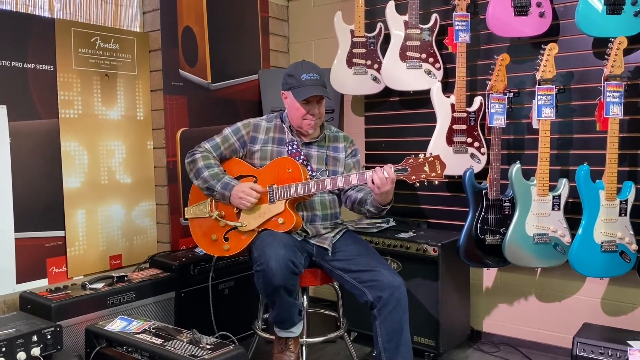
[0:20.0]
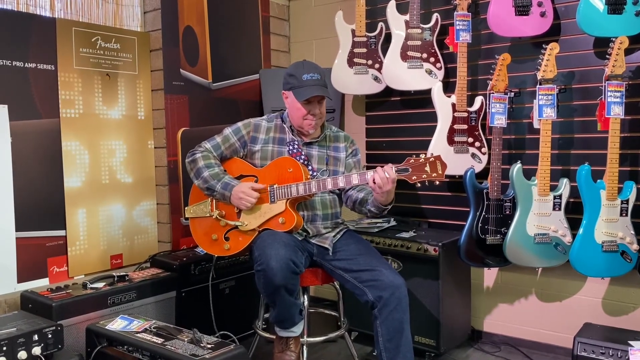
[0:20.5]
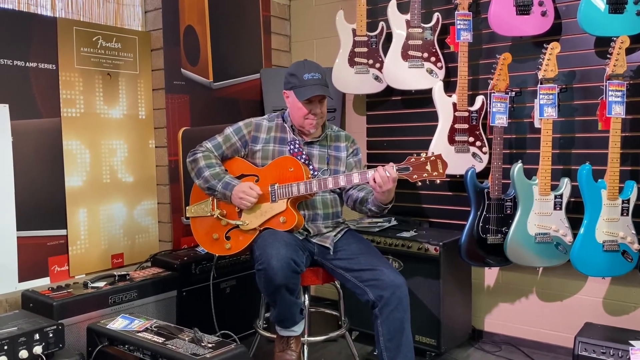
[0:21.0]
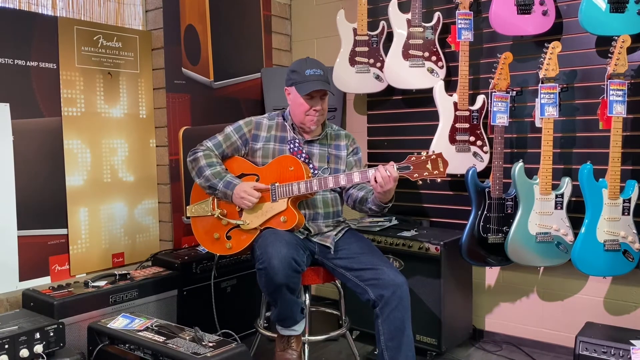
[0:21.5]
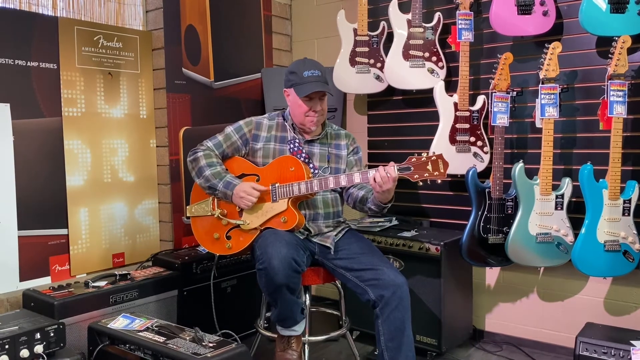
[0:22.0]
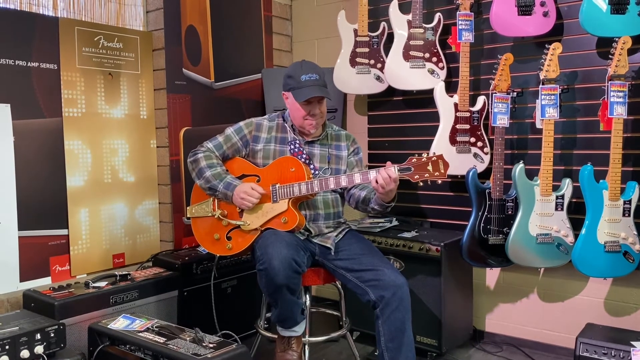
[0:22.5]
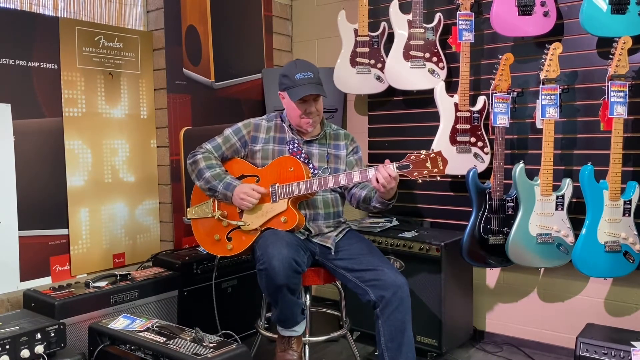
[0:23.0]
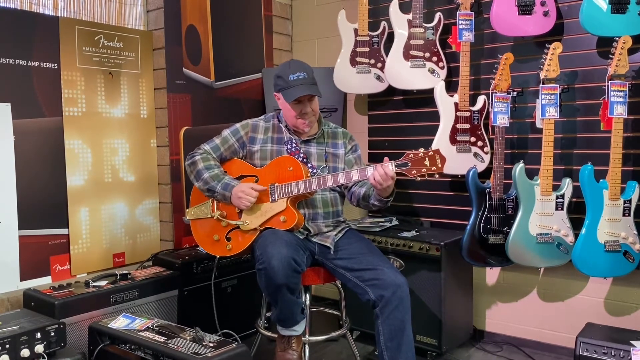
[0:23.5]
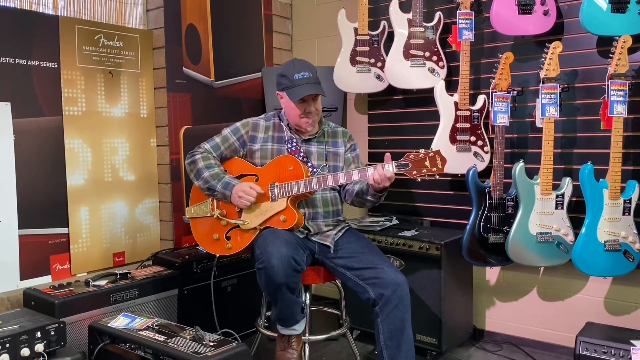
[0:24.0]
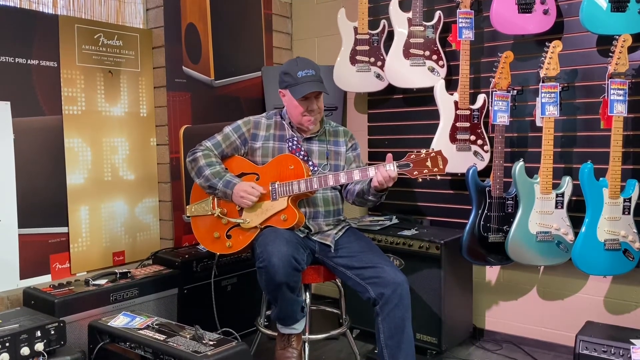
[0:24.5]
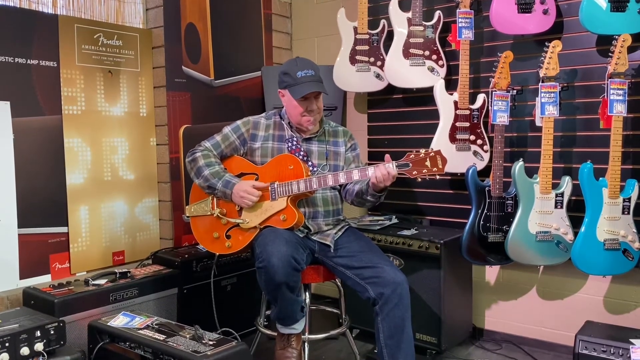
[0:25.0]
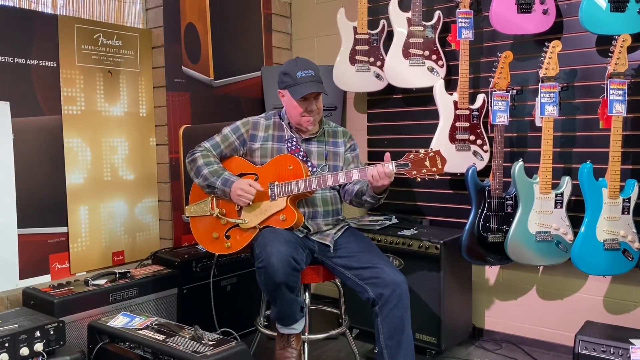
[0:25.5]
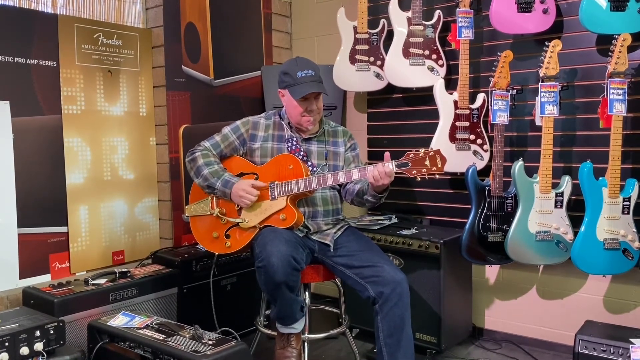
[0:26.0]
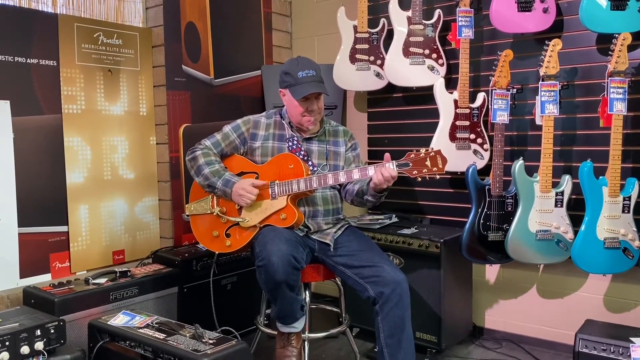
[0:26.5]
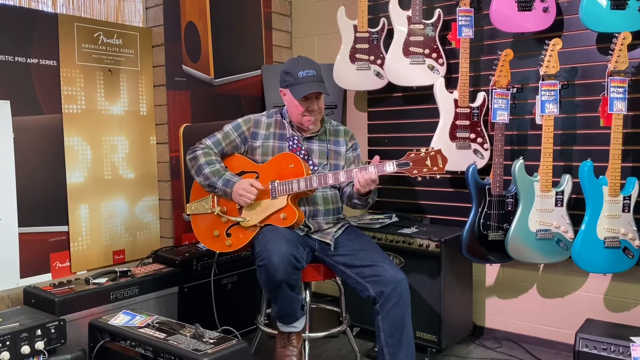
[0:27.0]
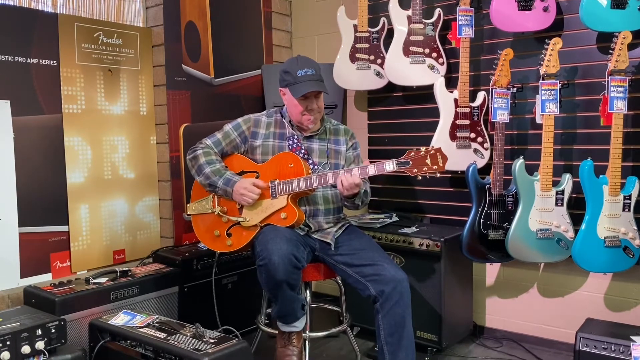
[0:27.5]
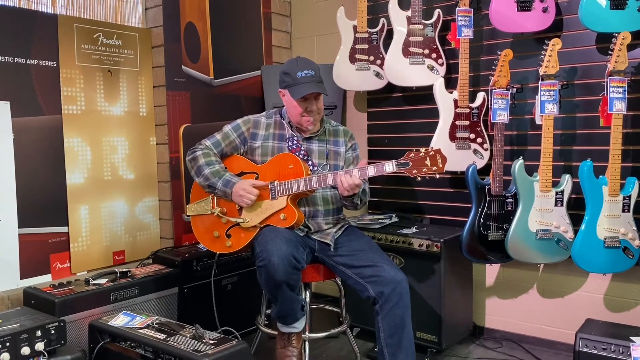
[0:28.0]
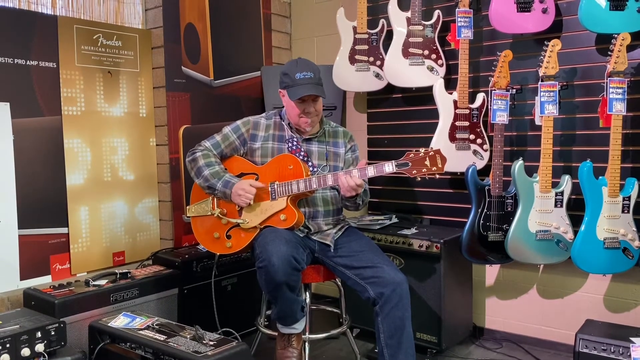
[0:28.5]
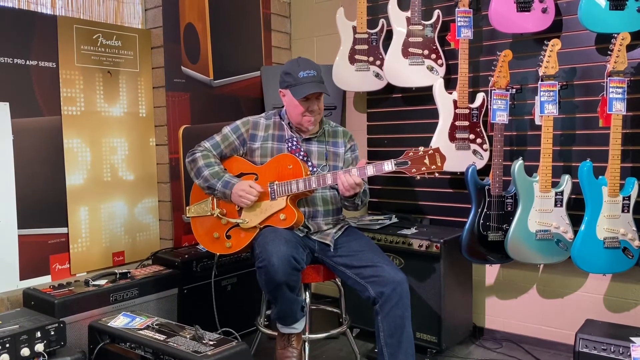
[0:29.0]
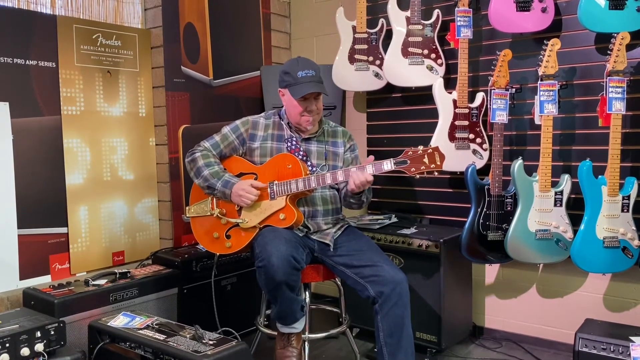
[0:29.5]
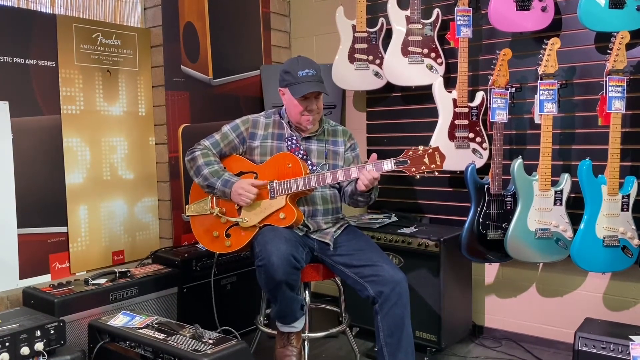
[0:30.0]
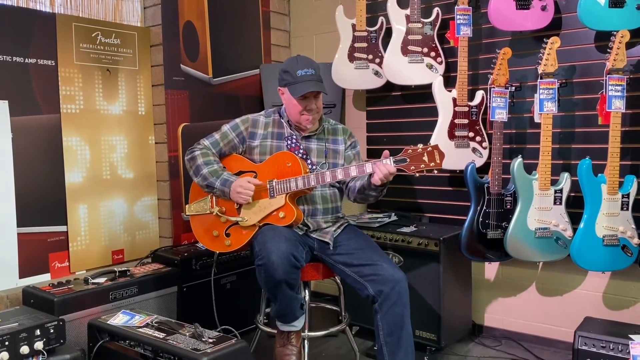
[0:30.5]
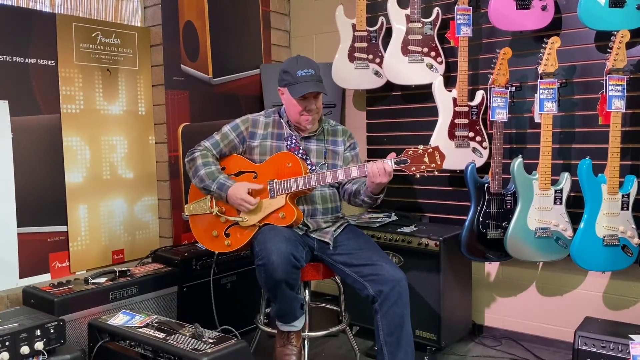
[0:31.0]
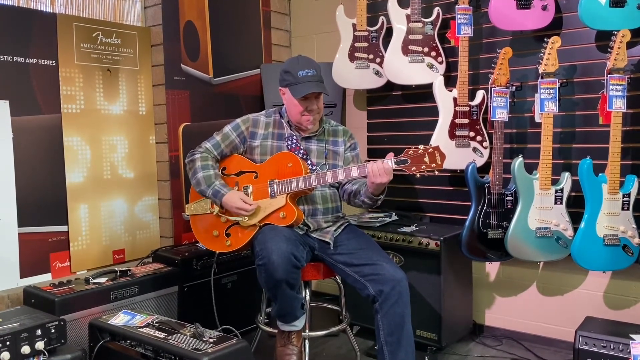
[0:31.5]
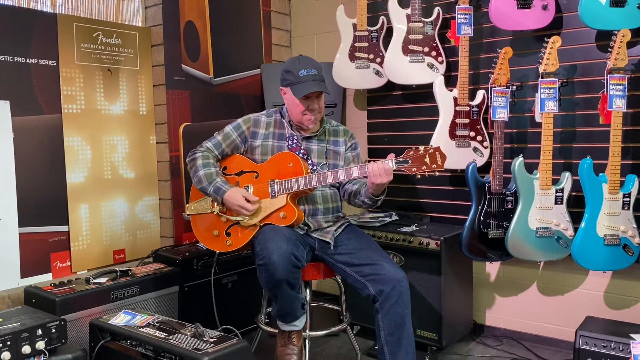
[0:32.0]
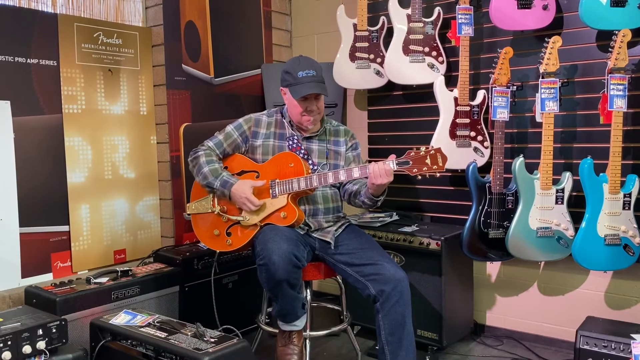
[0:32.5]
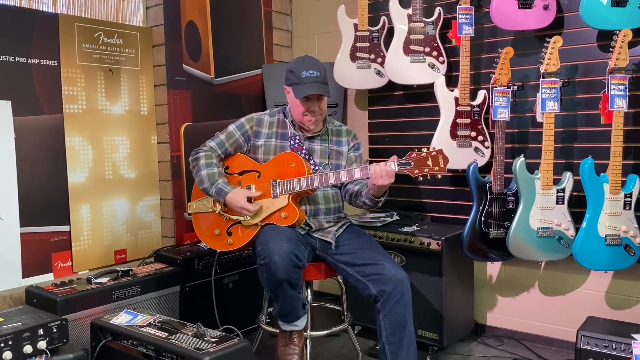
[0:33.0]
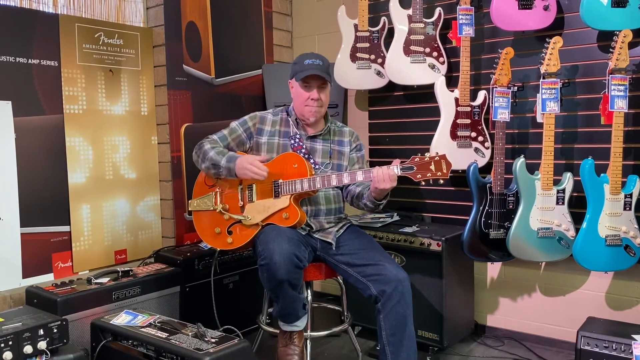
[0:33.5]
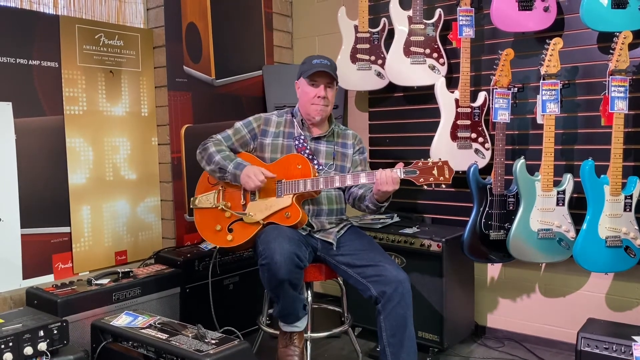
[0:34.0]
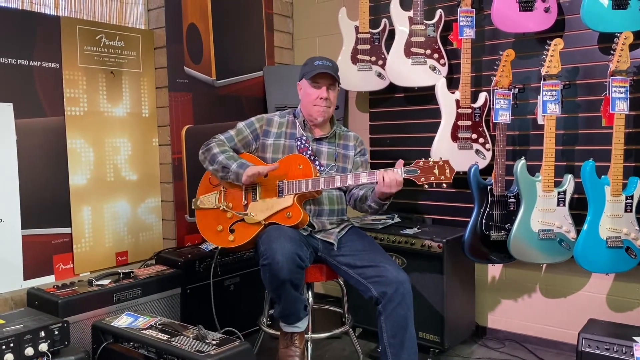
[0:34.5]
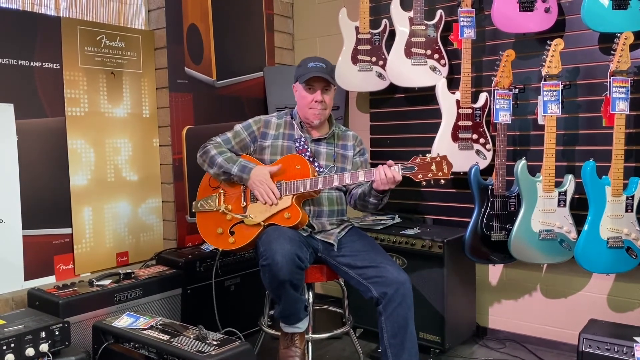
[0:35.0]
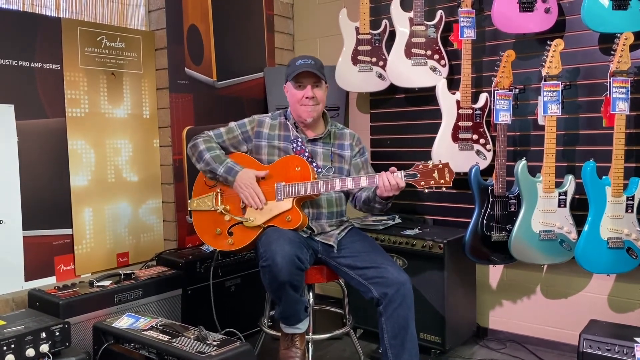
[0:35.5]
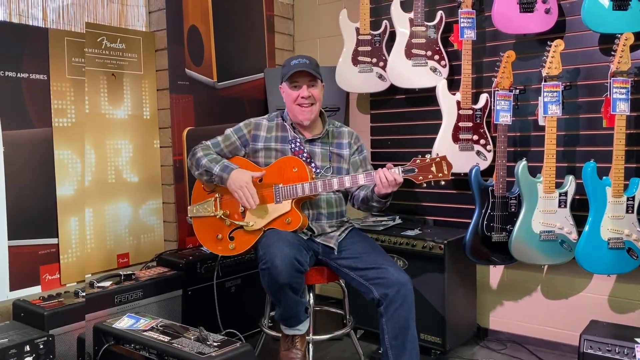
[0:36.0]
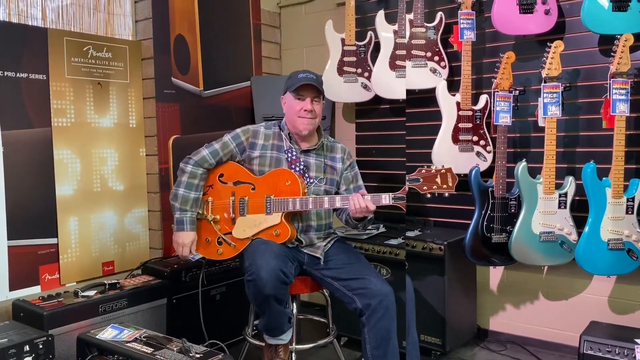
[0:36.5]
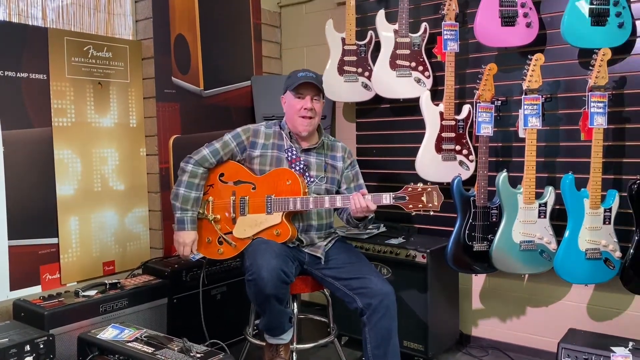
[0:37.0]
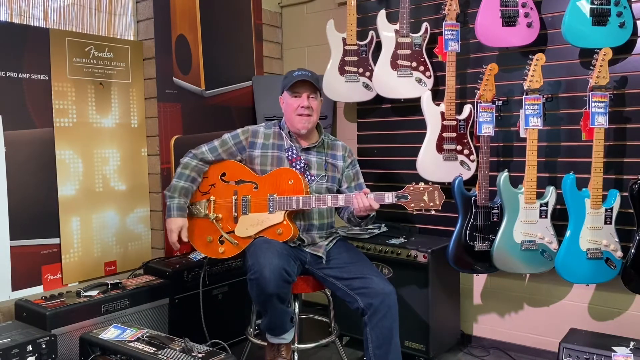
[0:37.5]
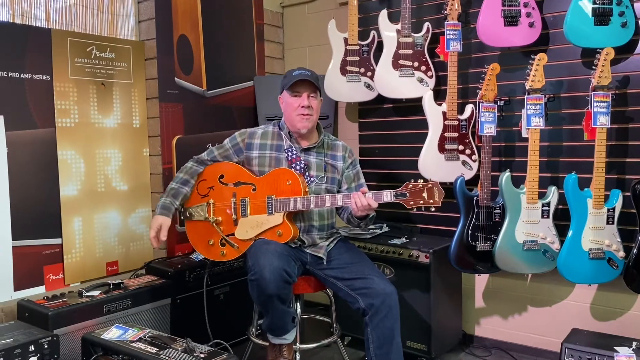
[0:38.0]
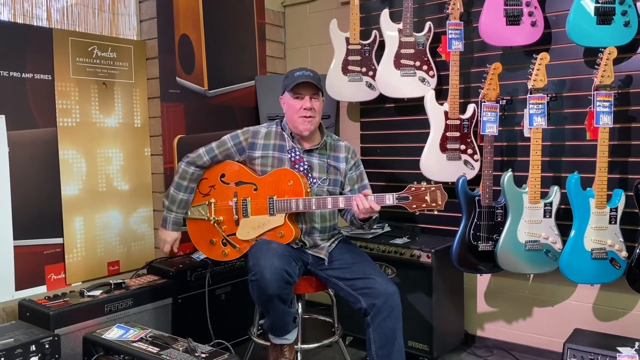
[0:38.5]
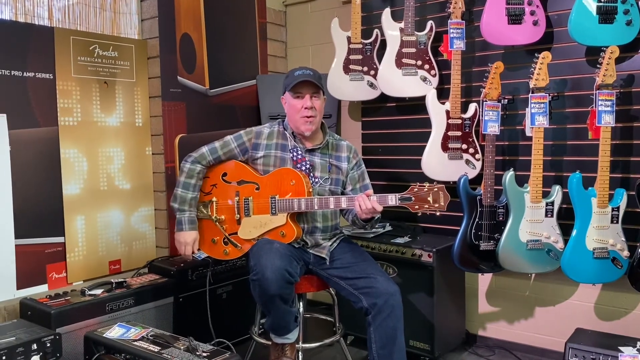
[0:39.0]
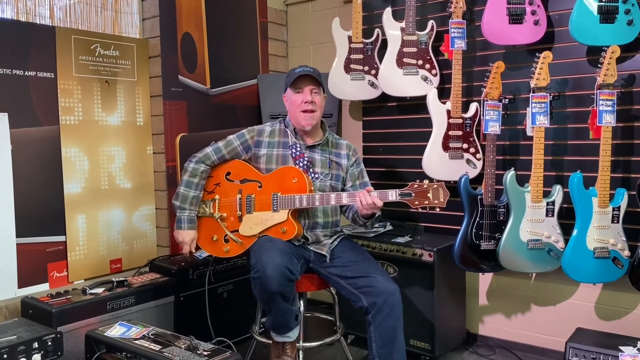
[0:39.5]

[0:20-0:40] The same man continues strumming his guitar. The shot appears to be filmed on a tripod; it is very static and the camera hardly moves. A little over halfway through, he stops playing and starts talking to the viewer with a very happy expression, apparently giving a demonstration of the guitar. As he moves his right arm to the back or bottom part of the guitar, more of it becomes visible: it is red or orange, with s-shaped or snake-shaped symbols on the top and apparently the sides. The strings have a gold color, and the top part seems to have a cream and putty beige look.